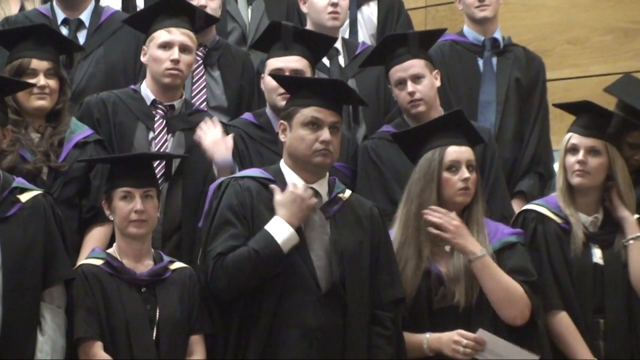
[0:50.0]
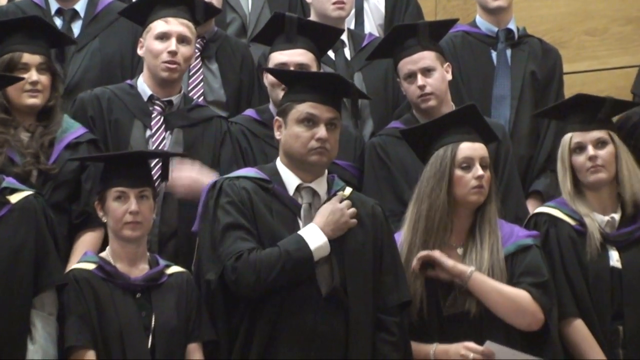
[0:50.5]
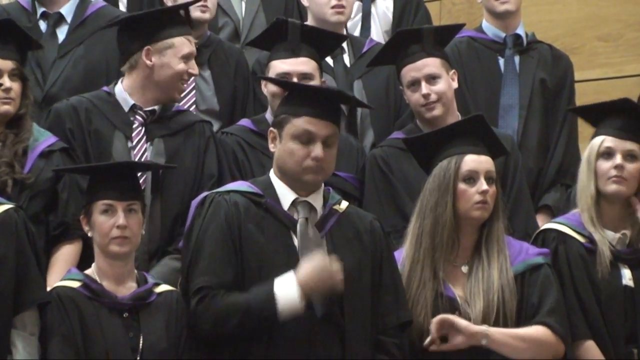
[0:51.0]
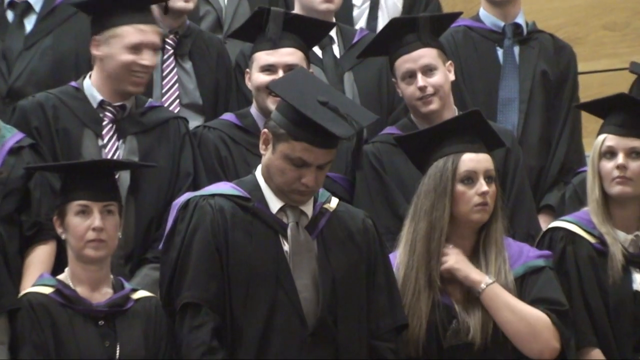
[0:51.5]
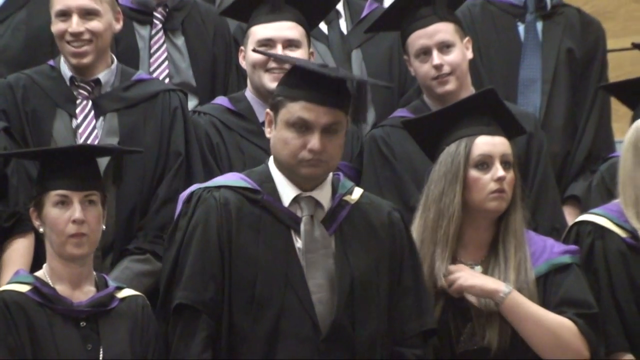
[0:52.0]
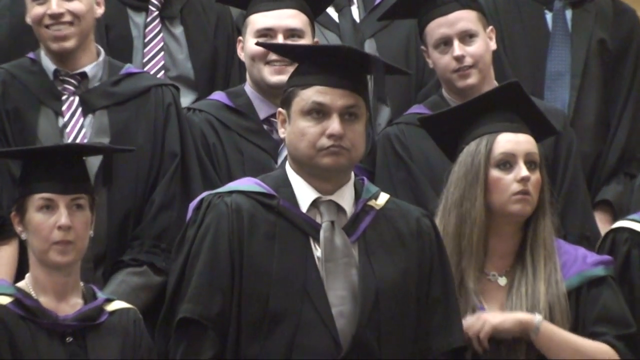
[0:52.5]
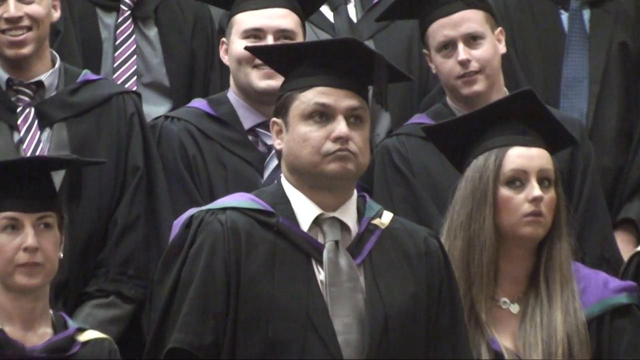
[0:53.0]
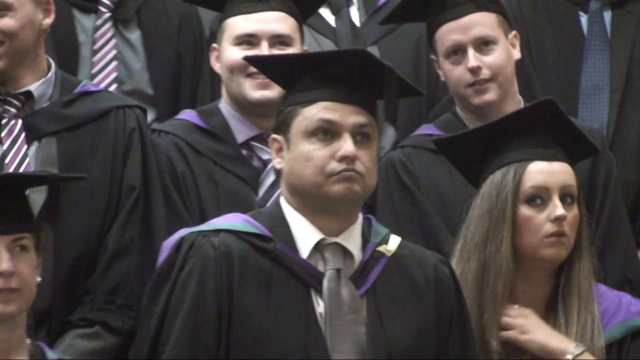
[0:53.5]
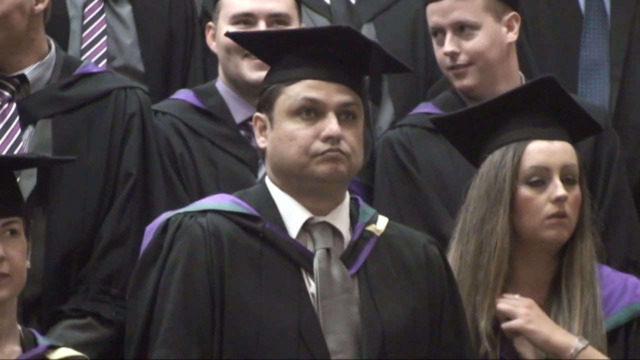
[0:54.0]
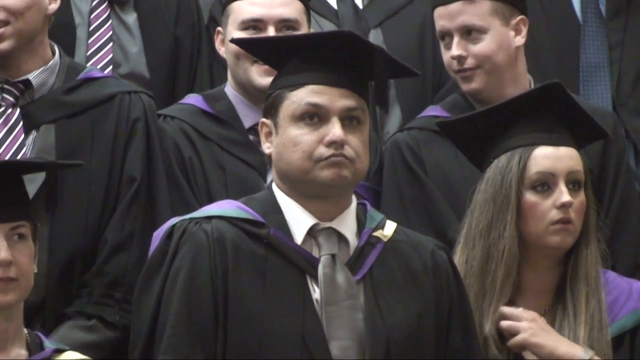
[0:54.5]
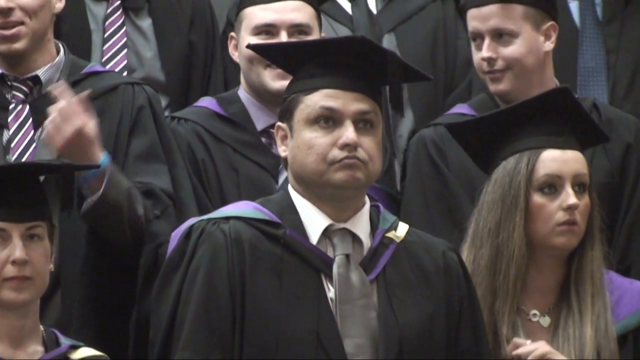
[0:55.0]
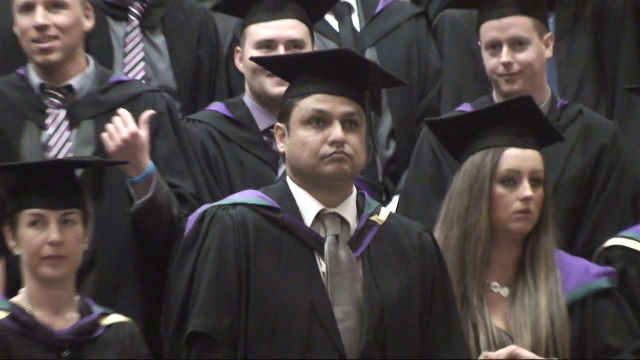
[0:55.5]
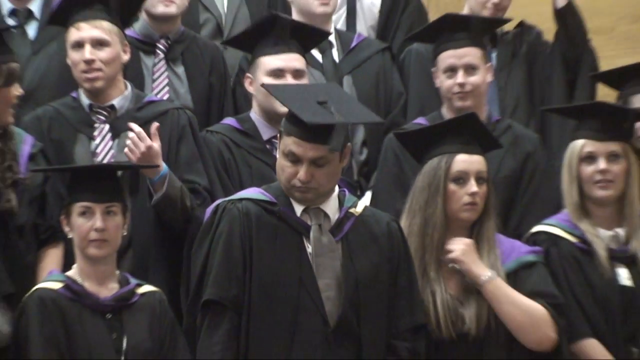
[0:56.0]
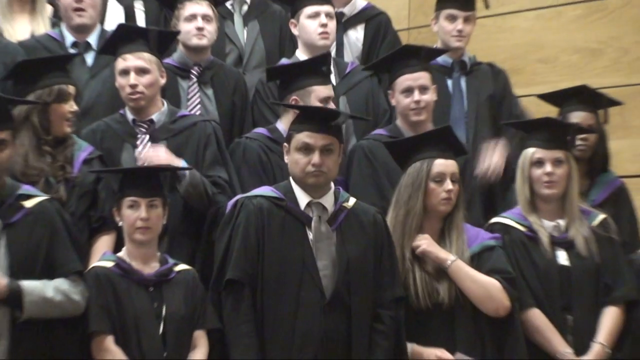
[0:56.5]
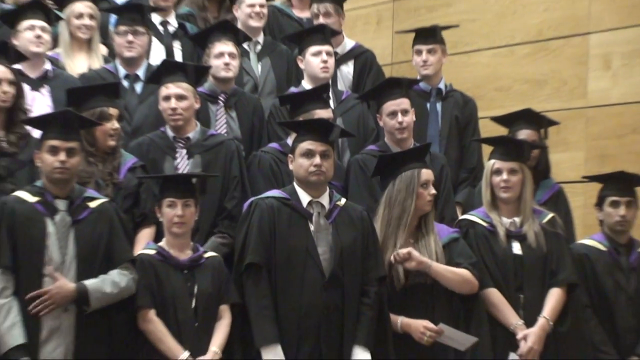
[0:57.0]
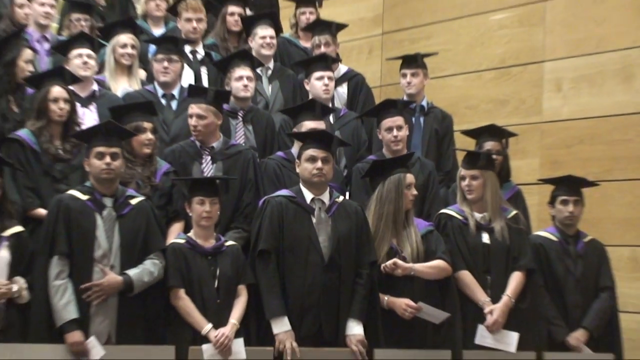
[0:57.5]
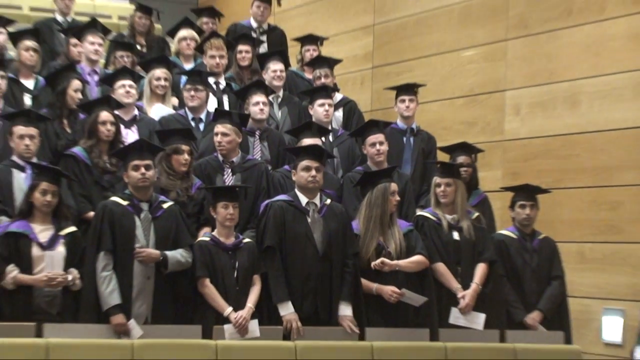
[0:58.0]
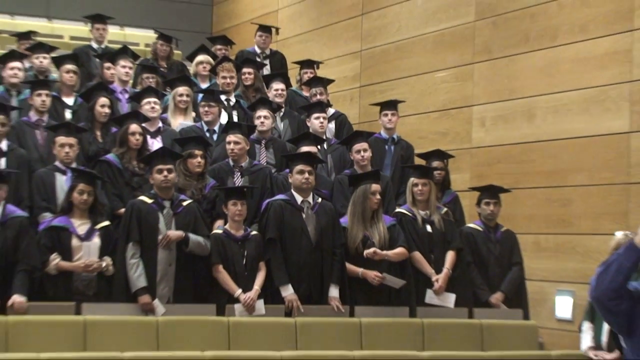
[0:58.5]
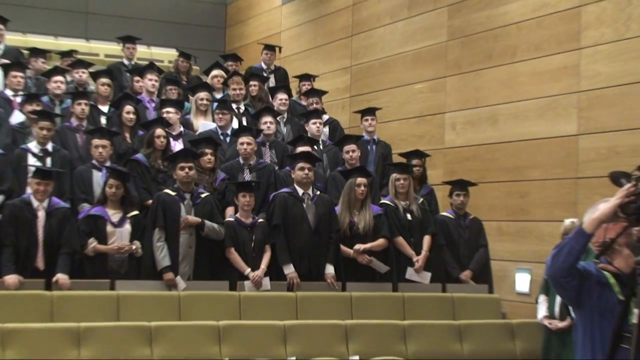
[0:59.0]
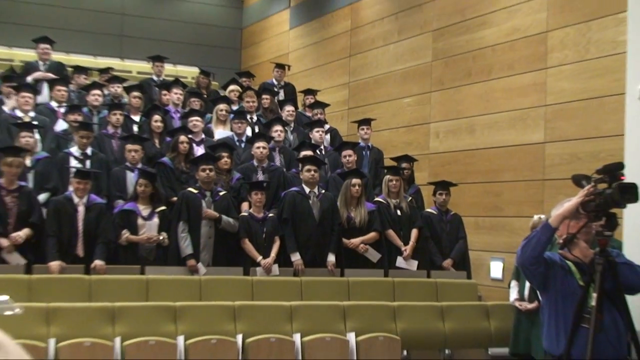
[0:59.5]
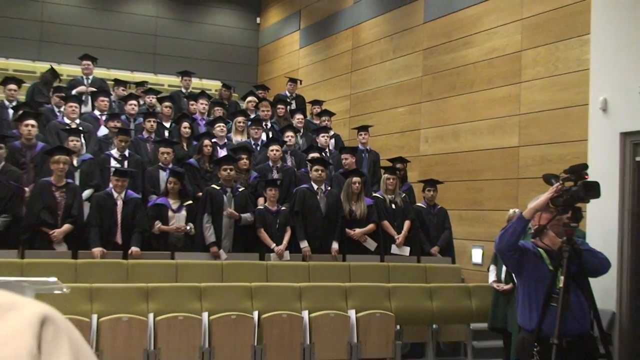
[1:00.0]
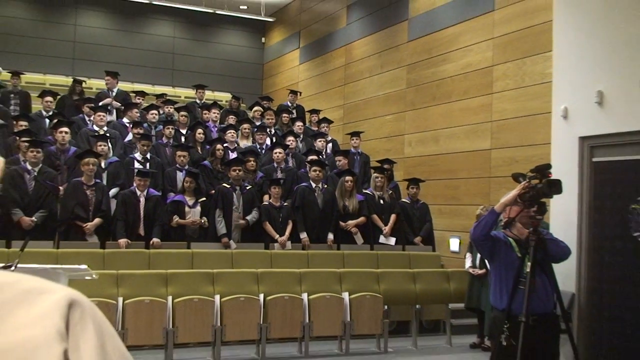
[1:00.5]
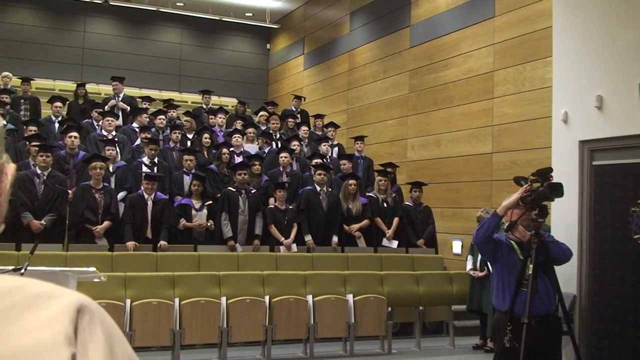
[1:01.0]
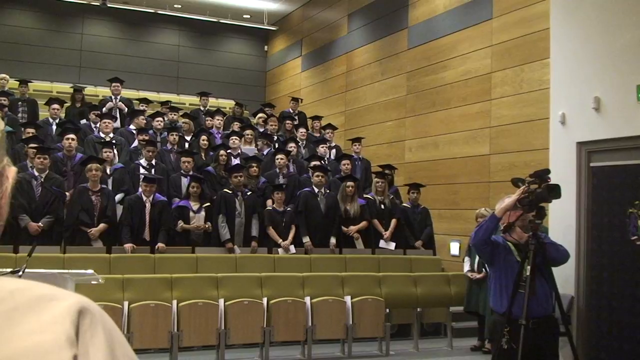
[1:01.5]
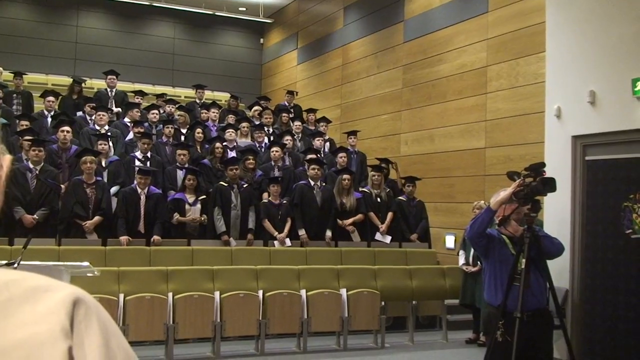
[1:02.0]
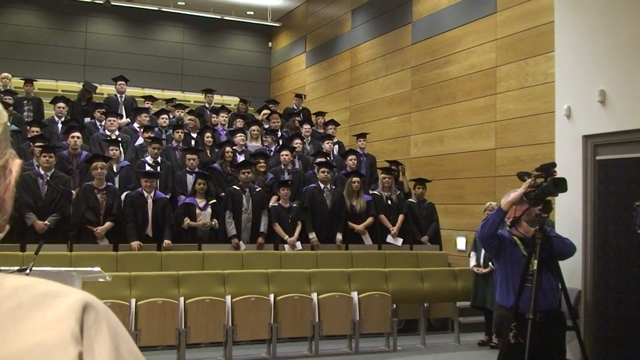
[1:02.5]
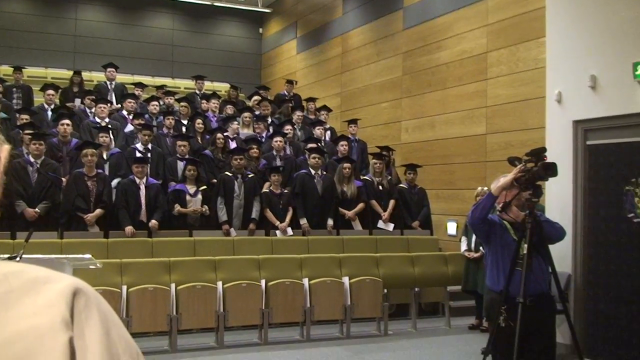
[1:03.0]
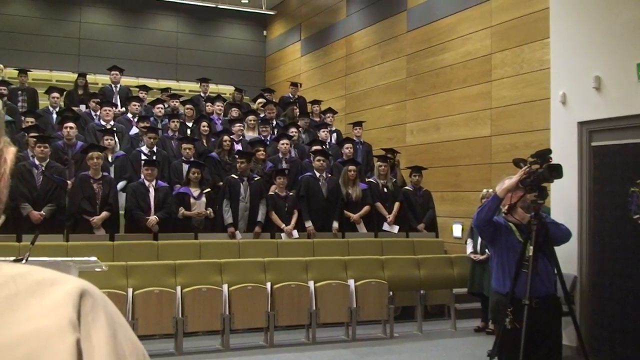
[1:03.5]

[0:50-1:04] Several of the male graduates on the left wear the same tie, a loud pattern of darker purple, lilac and white, seen in close-up. Some graduates have plain purple stoles and some have purple and gold ones, probably marking cum laude and magna cum laude. Most of the graduates appear to have black tasseled hats. They look a little fed up with the photography being done, somewhat irritated. The camera zooms out, showing a woman standing behind where the videographer is. She wears what might be a graduation gown or possibly a green dress with white sleeves, along with black pants and black shoes. She has short blonde hair and is older, possibly a professor. The graduates look to be older than the typical 22 to 24 graduation range; most appear to be in their later 20s to mid-30s, suggesting these are probably graduate degrees rather than undergraduate.